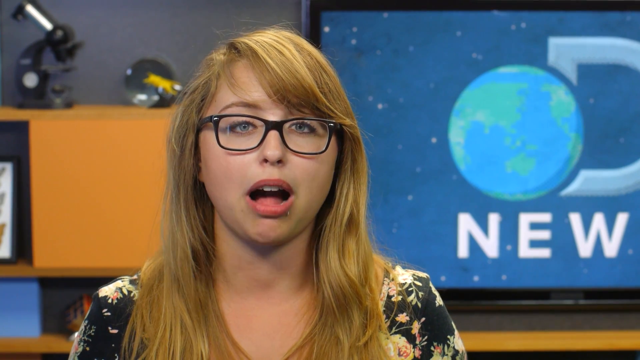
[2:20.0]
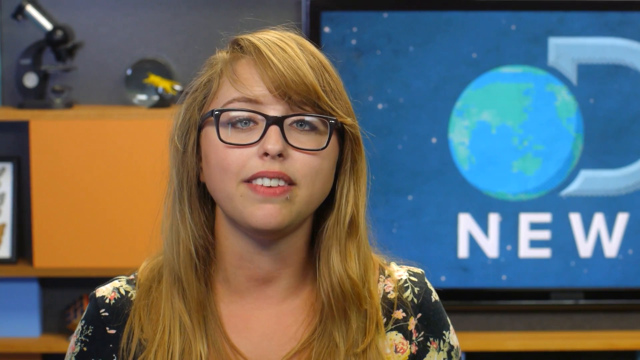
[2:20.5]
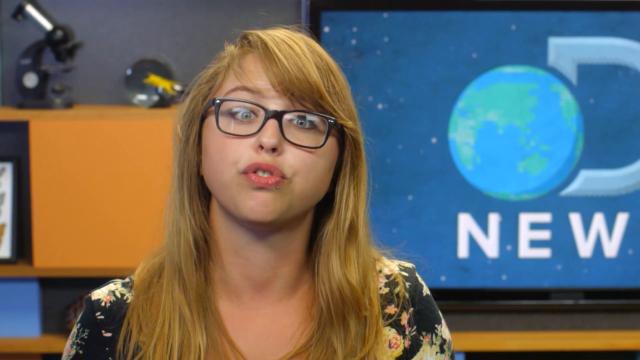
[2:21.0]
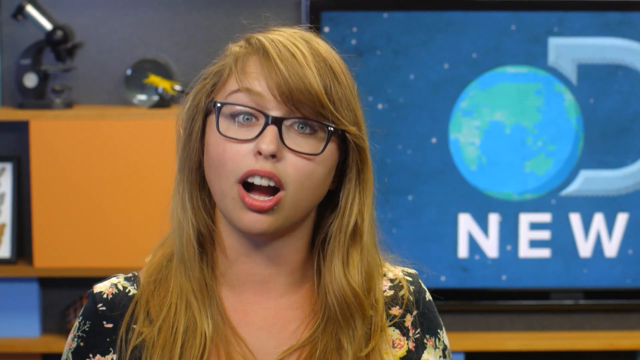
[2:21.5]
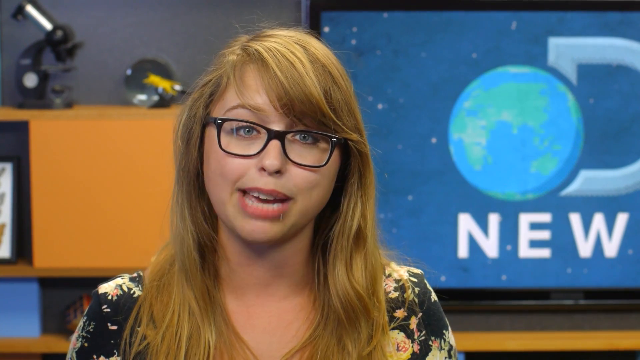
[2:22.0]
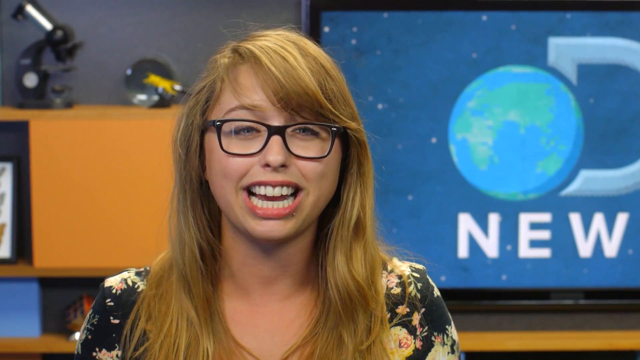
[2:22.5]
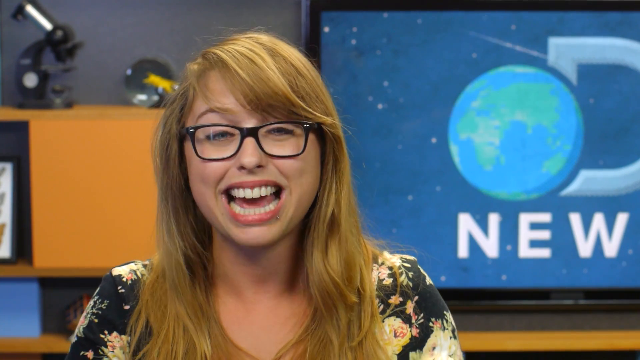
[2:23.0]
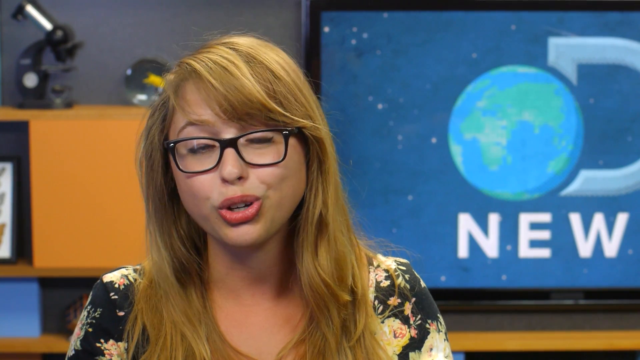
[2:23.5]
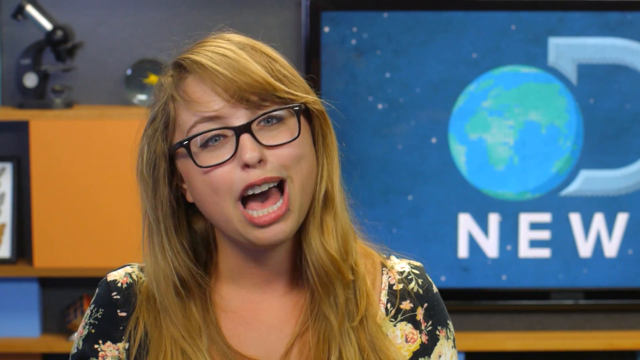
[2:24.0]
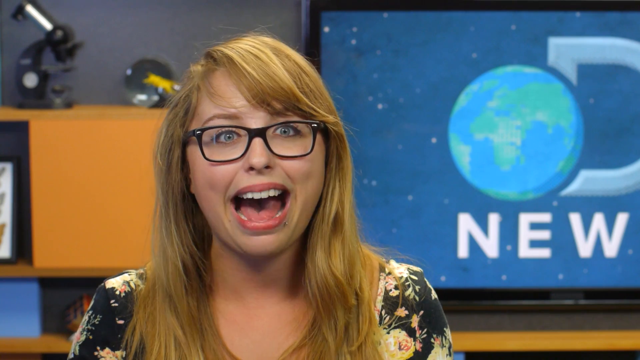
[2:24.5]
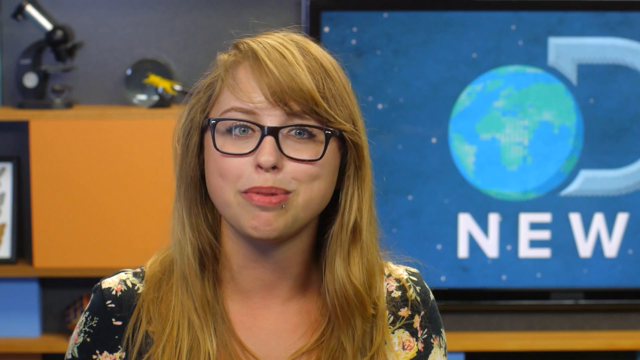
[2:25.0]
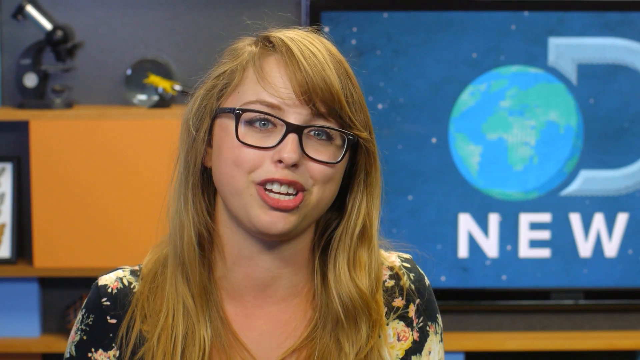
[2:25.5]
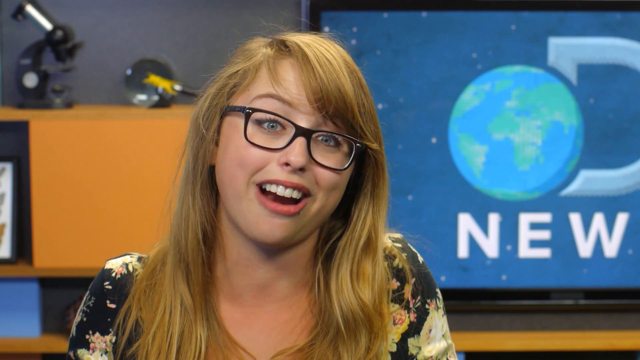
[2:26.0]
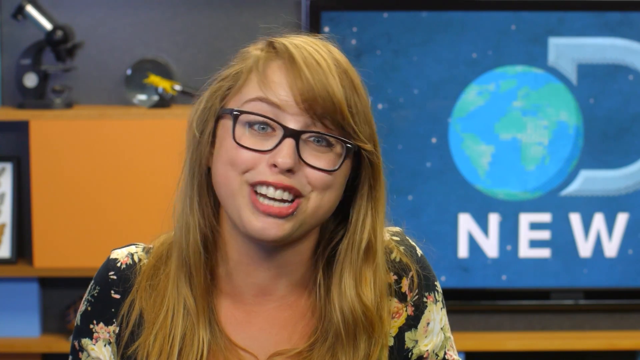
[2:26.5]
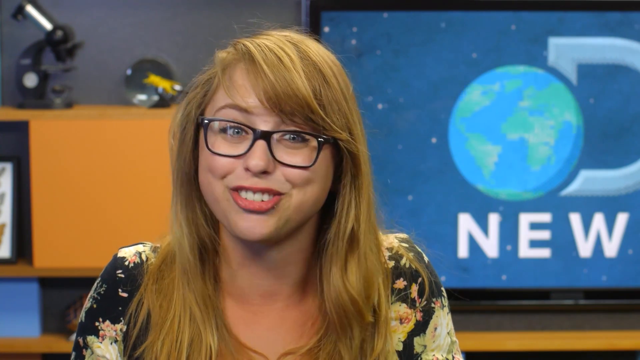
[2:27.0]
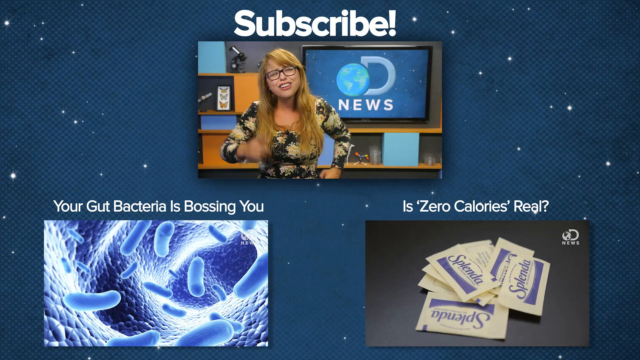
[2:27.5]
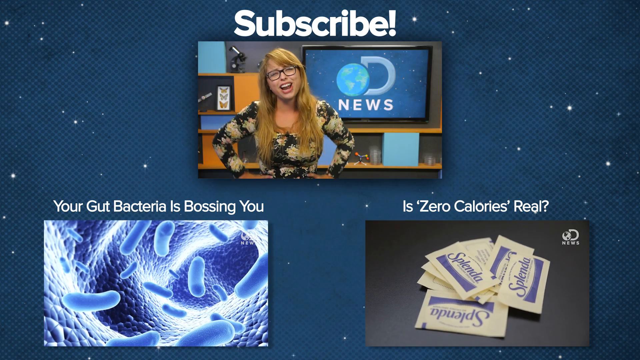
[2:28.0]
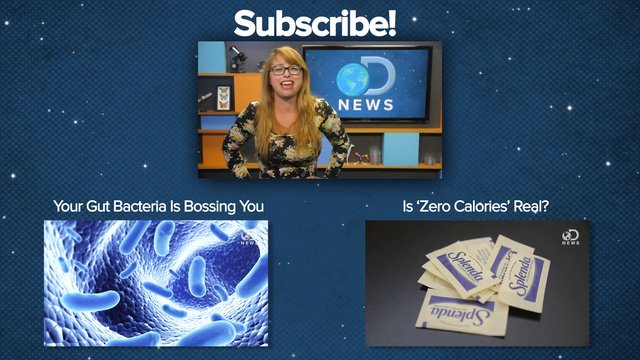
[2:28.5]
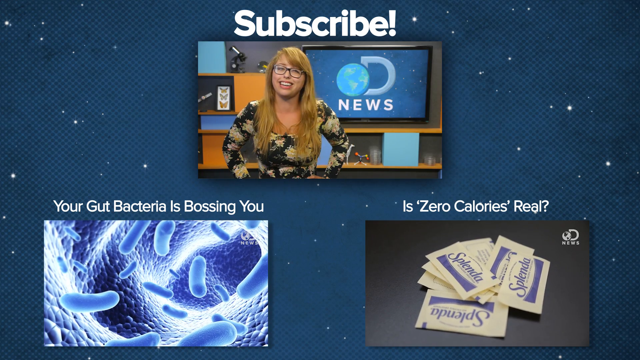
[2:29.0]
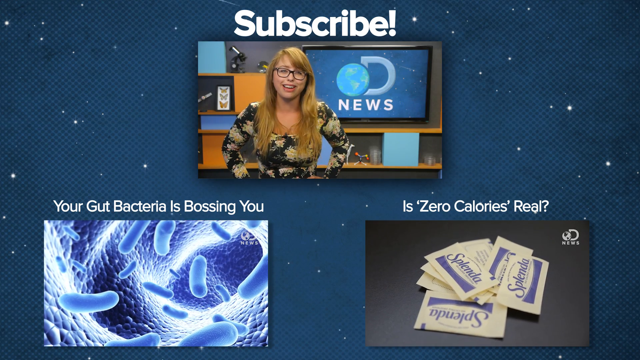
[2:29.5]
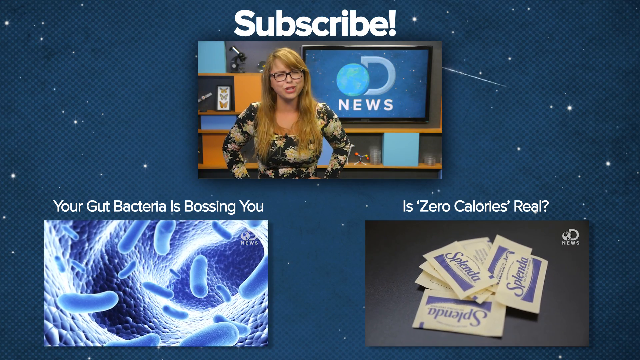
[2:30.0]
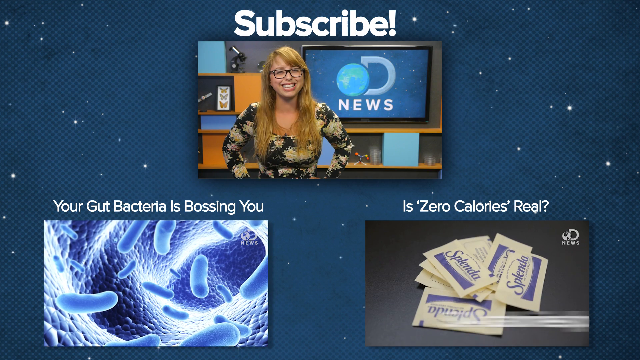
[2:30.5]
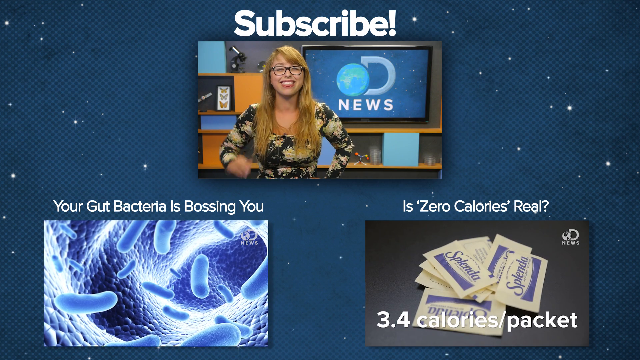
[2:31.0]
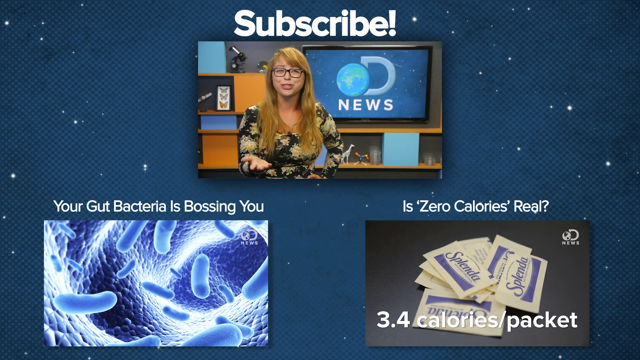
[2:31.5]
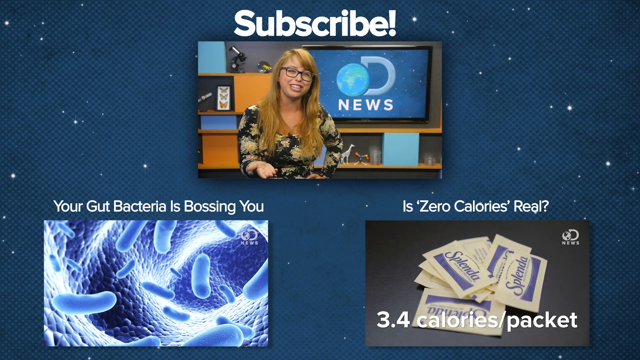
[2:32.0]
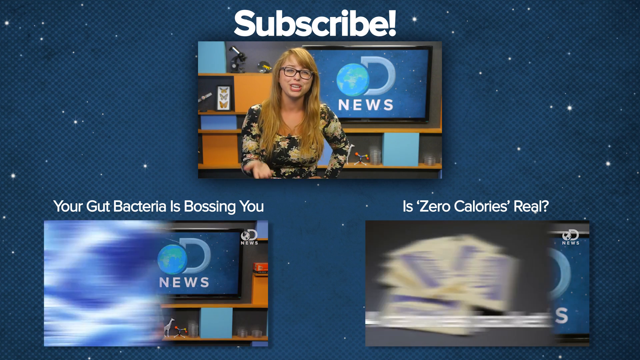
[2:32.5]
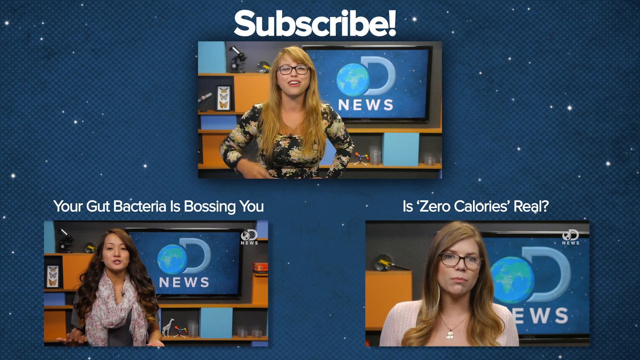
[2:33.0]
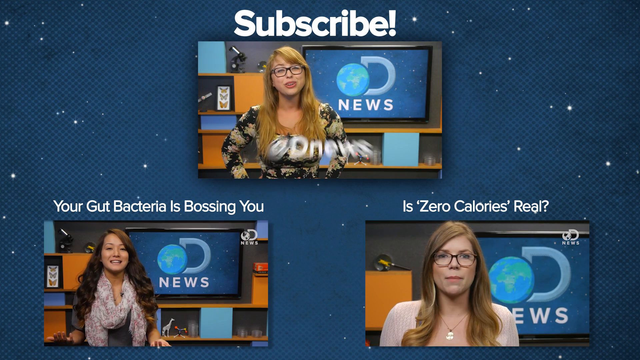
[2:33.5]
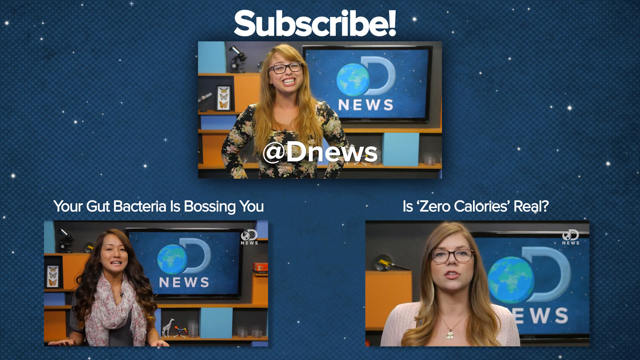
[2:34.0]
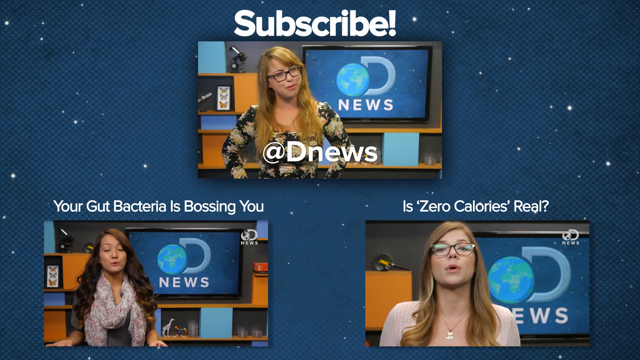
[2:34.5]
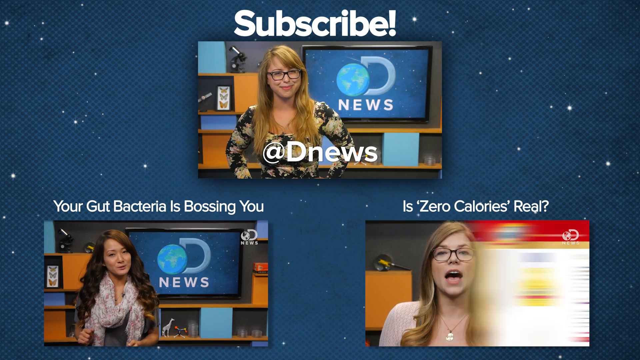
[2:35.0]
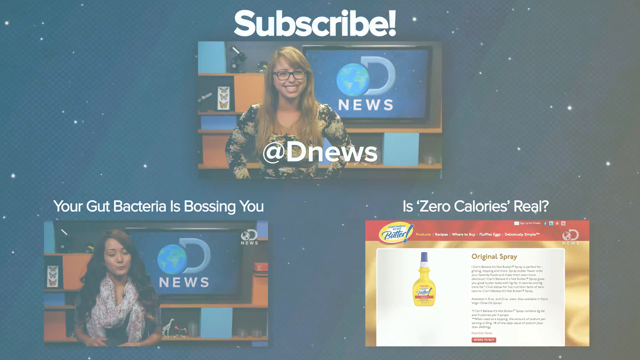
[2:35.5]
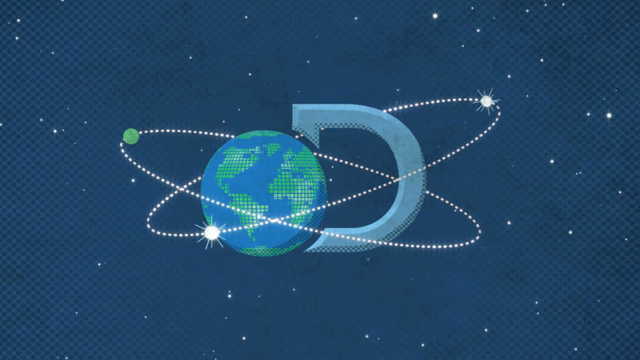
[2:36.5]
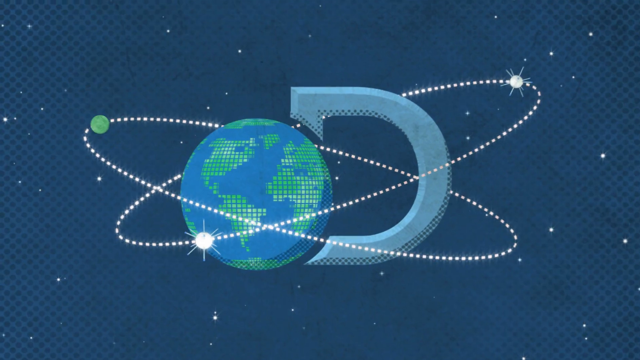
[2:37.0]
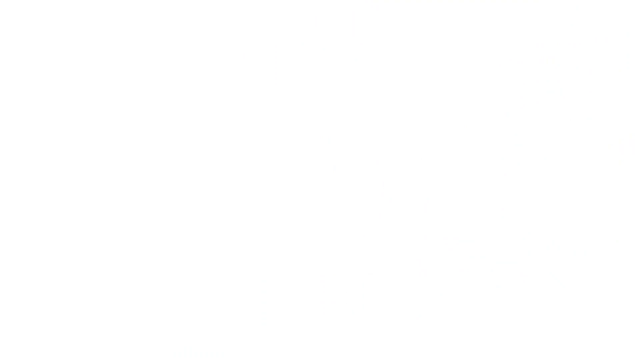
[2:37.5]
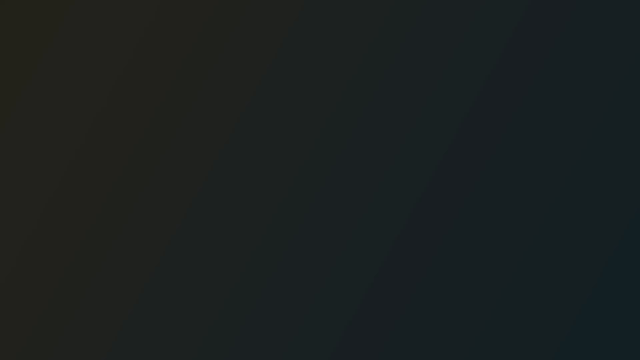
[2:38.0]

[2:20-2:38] Laci is in the studio, where she appears to be wrapping up the news, her animated gestures winding down. Then the D News logo appears: a slowly spinning globe with green landmasses and blue waters, the capital letter D, and underneath it the word "NEWS" in white, against a background of shooting stars. Laci is still visible. Across the logo are white streaks of stars in motion, two rings spinning in opposite directions that cross to form a flattened X.